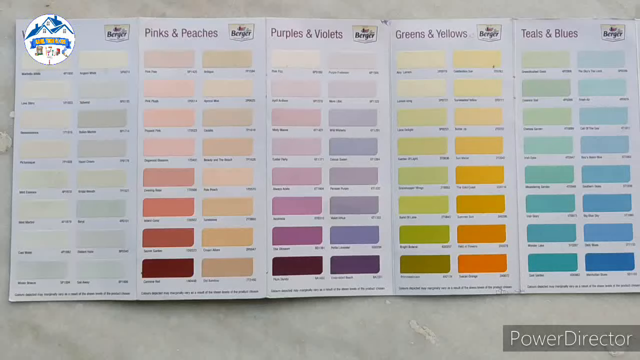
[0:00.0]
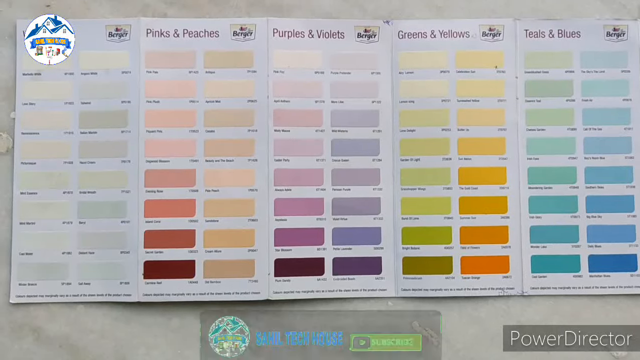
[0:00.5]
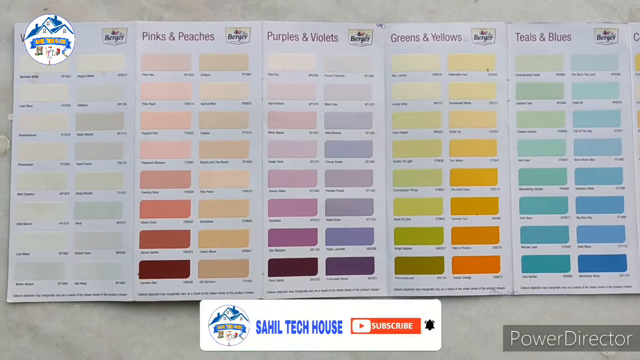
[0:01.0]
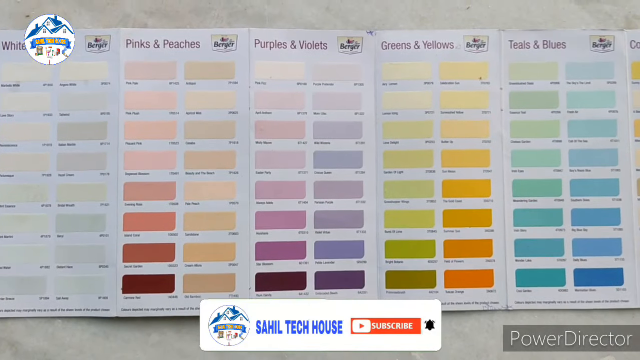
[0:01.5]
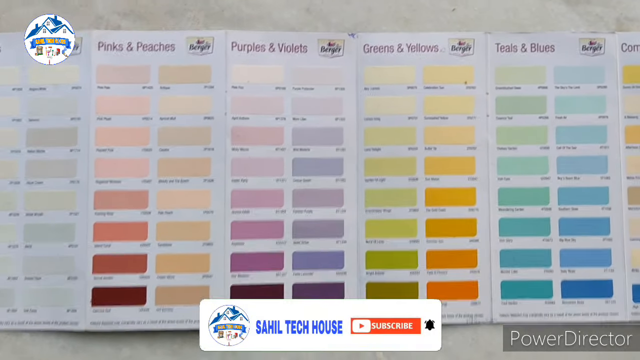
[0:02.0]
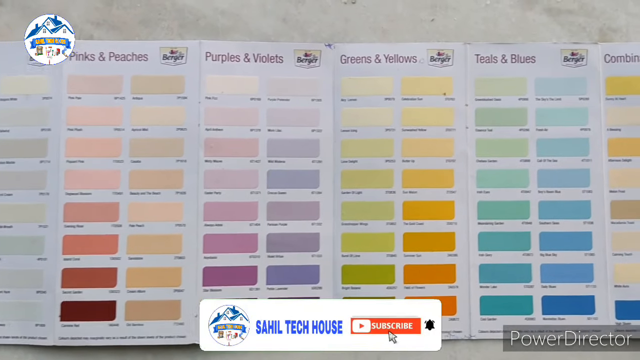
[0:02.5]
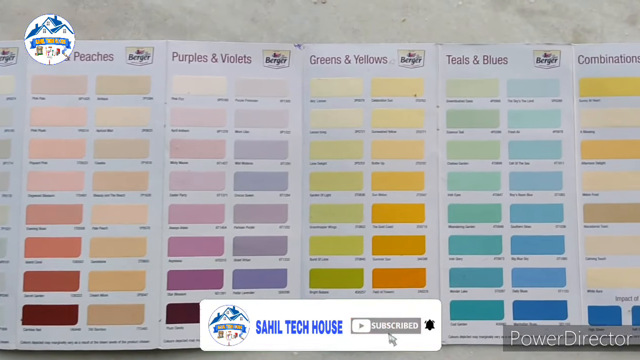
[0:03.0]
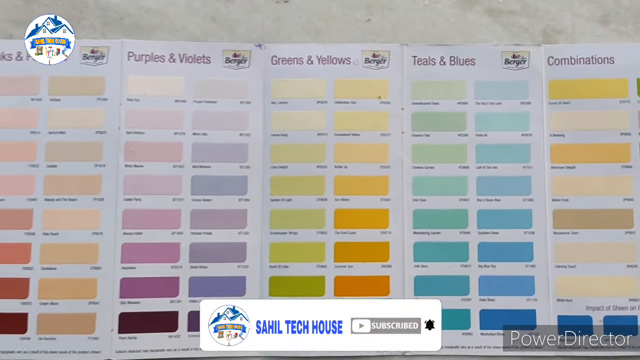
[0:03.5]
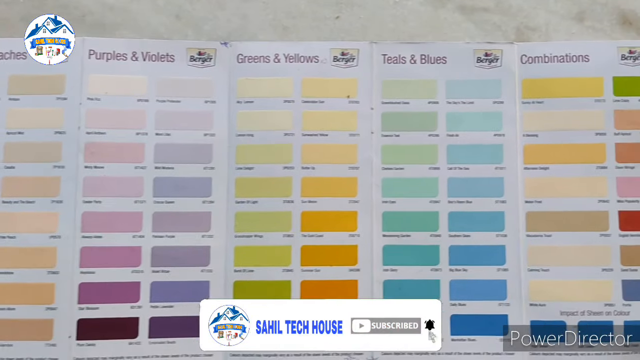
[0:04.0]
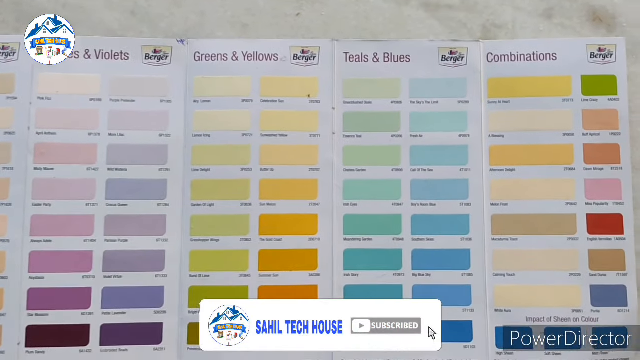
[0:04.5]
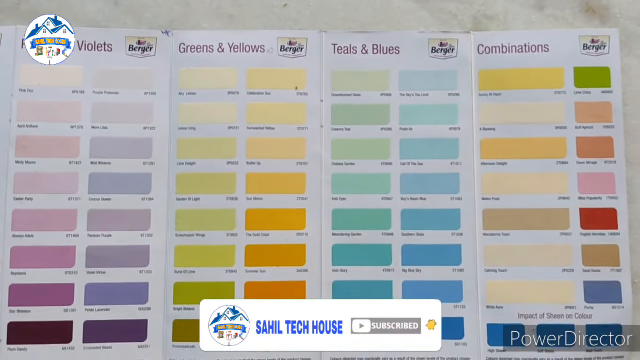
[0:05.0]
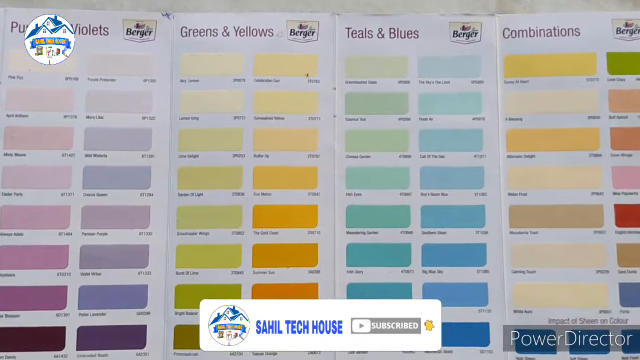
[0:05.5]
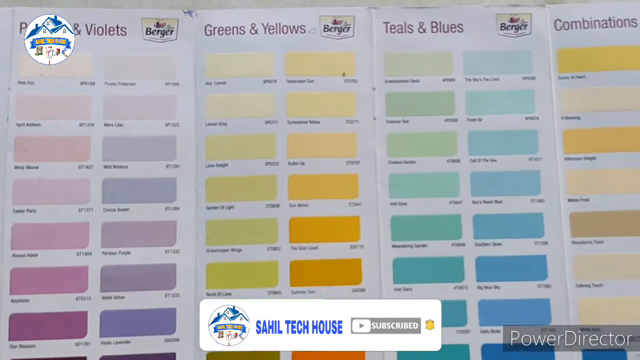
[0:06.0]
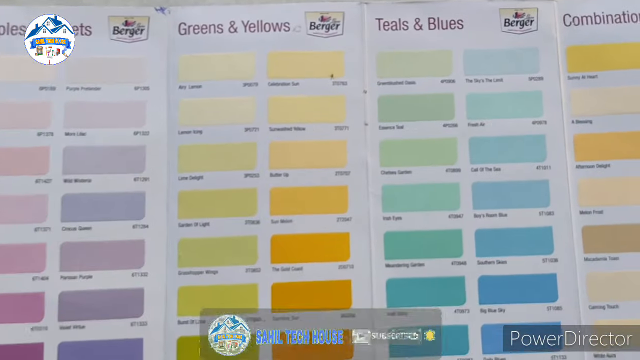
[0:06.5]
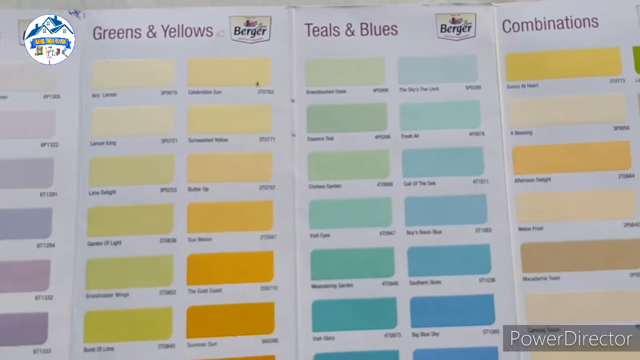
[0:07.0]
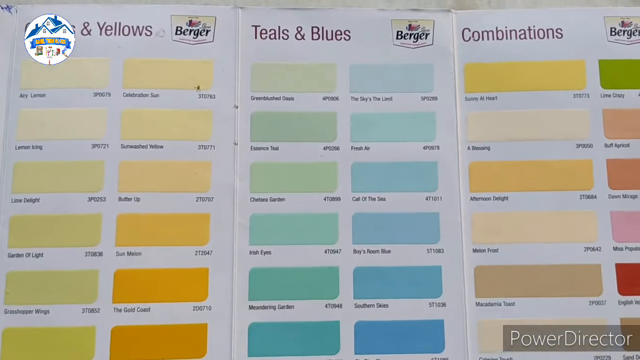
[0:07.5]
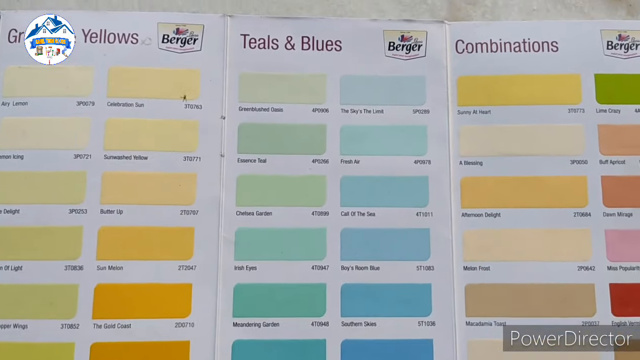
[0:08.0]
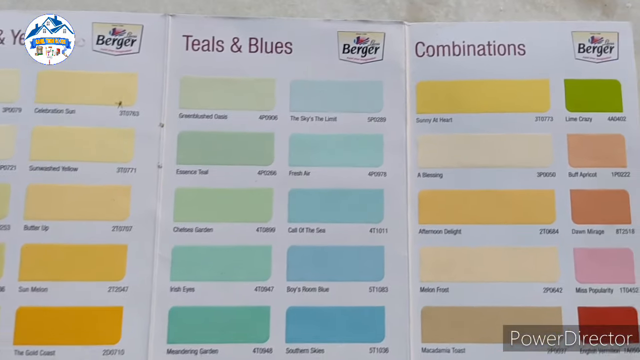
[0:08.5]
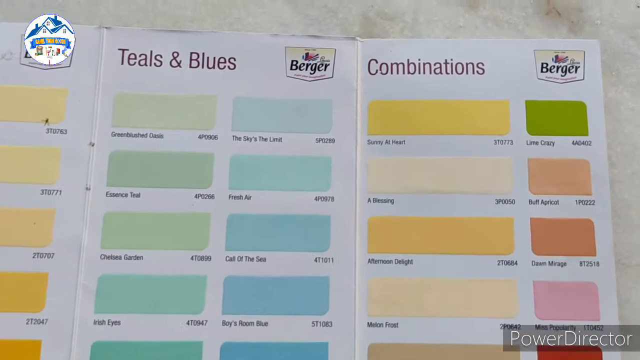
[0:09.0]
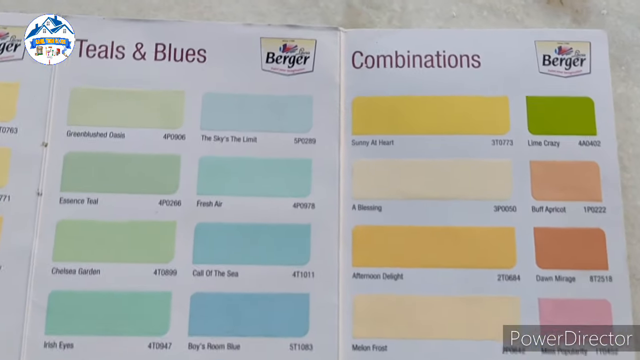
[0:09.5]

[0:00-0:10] A variety of paint samples is sorted by color, including pinks and peaches, purples and violets, greens and yellows, and teals and blues, showing a whole range of colors. There is some text and a logo, and the view zooms in, moving closer toward the teals and blues and focusing on different shades of those. The logo appears to read "Berger", possibly the name of the paint brand. The paint samples are on a white background in what appears to be a store.